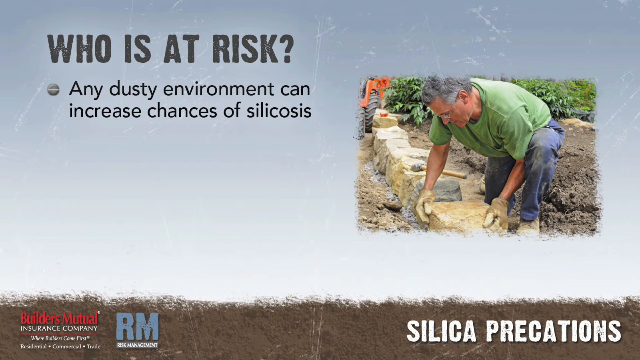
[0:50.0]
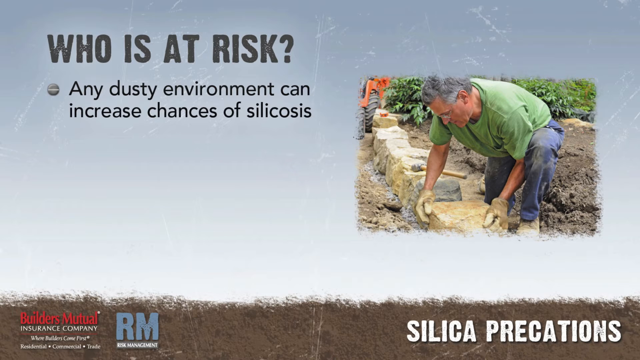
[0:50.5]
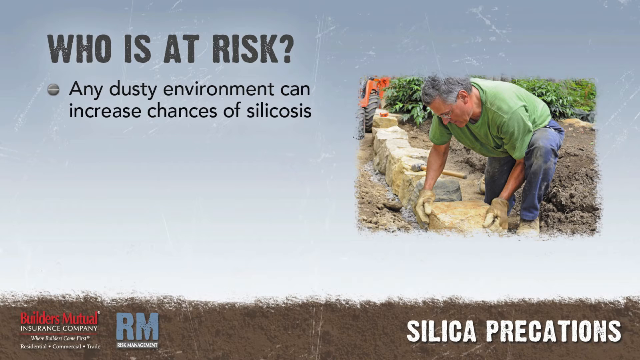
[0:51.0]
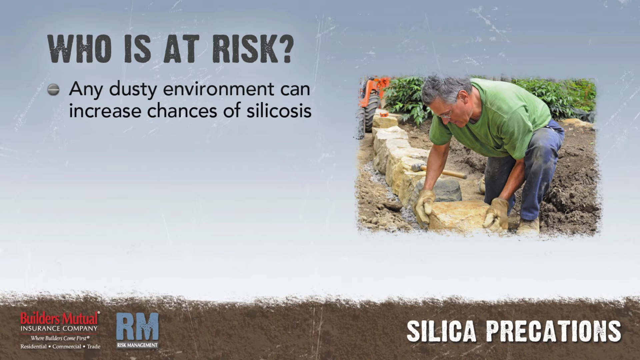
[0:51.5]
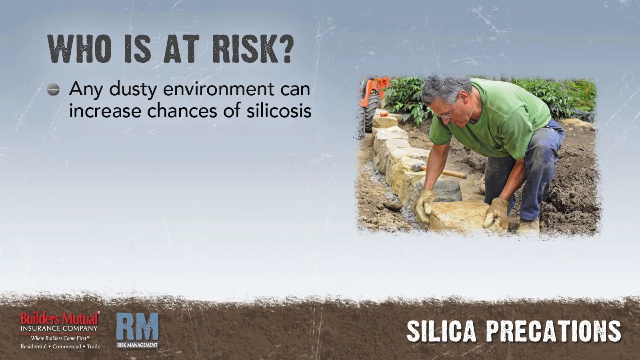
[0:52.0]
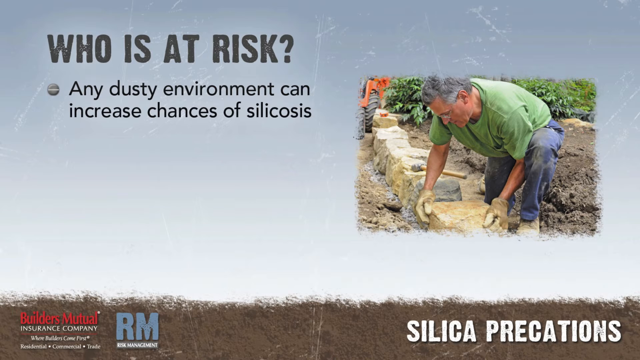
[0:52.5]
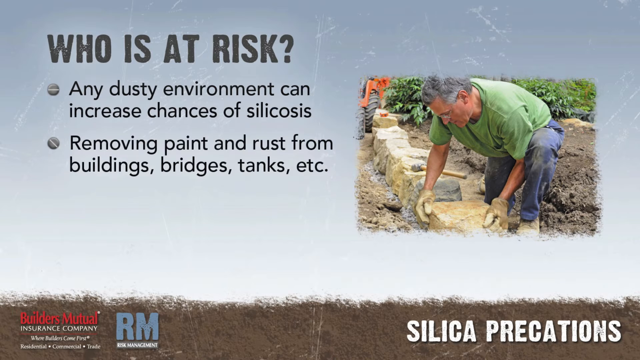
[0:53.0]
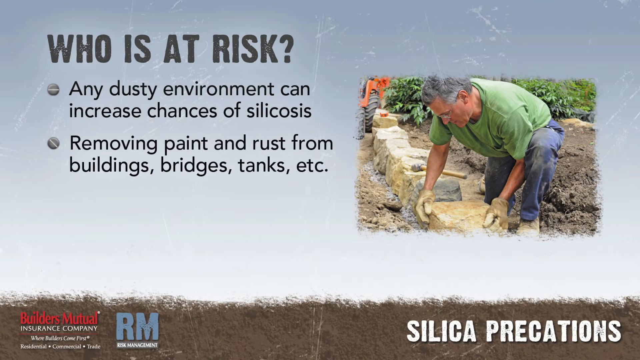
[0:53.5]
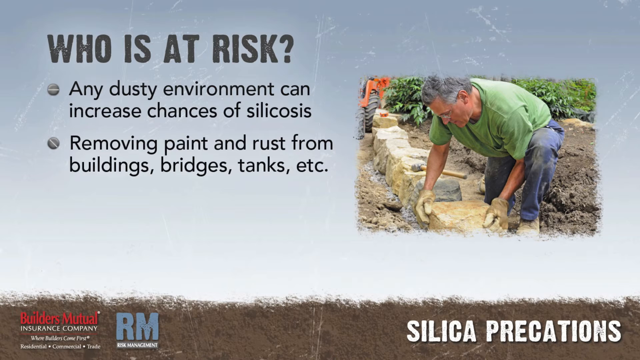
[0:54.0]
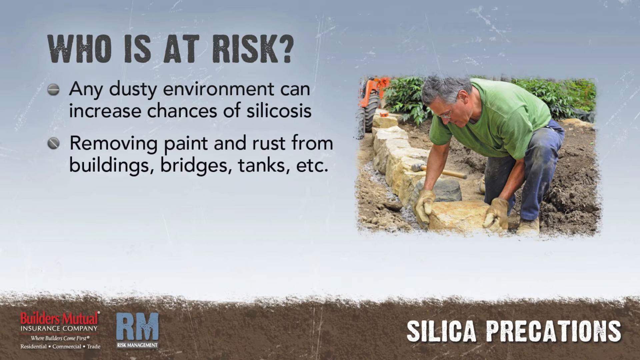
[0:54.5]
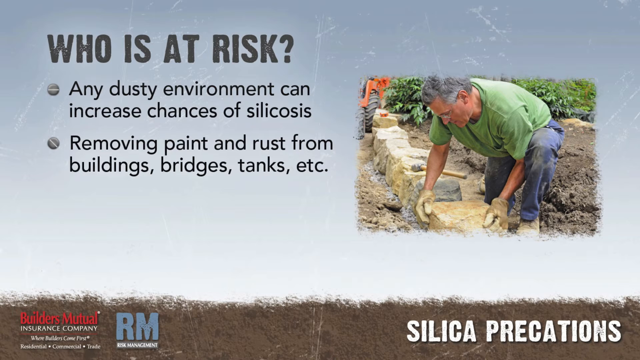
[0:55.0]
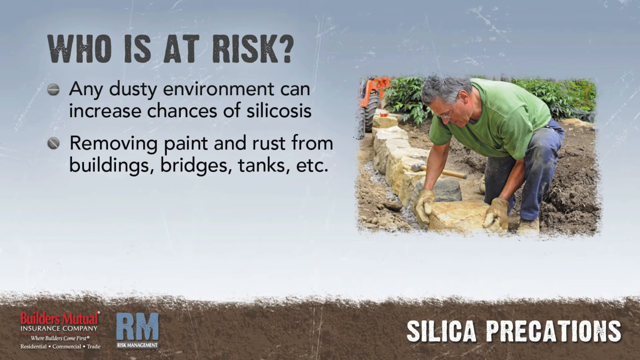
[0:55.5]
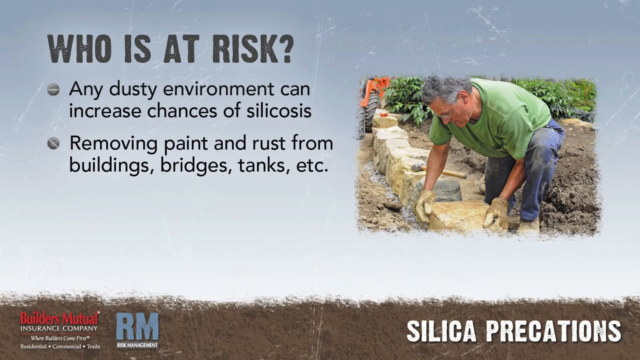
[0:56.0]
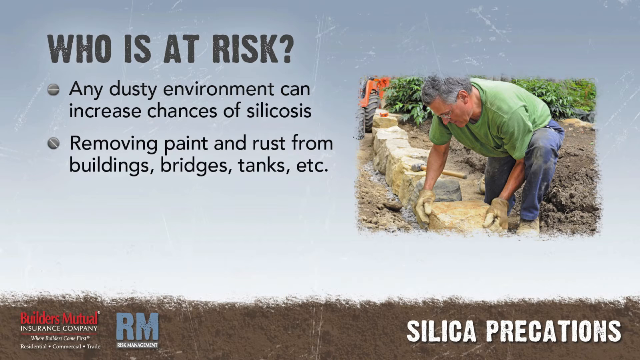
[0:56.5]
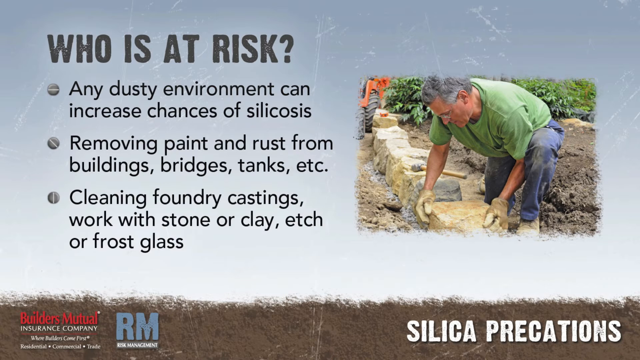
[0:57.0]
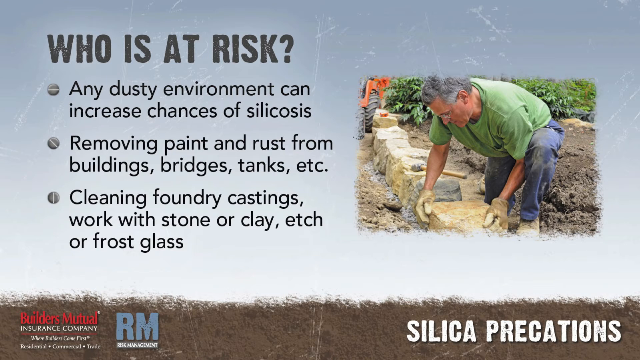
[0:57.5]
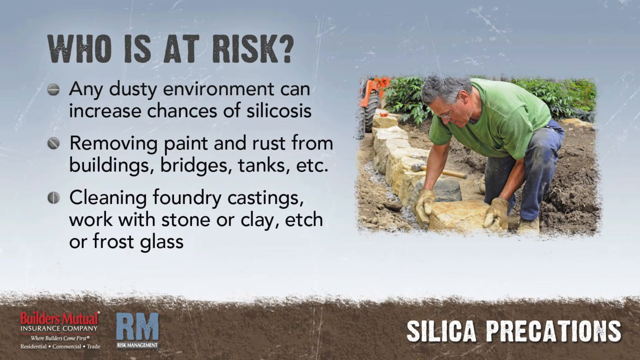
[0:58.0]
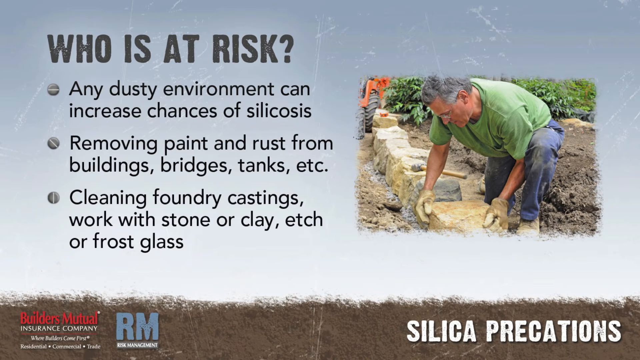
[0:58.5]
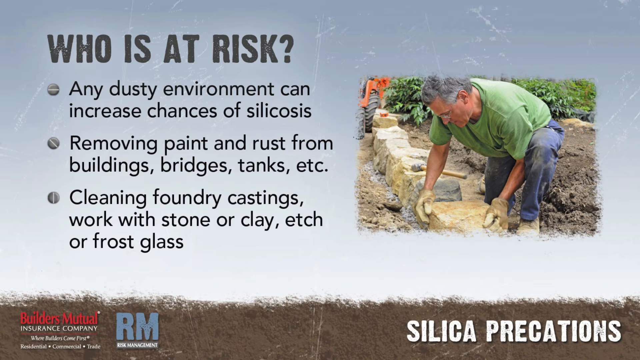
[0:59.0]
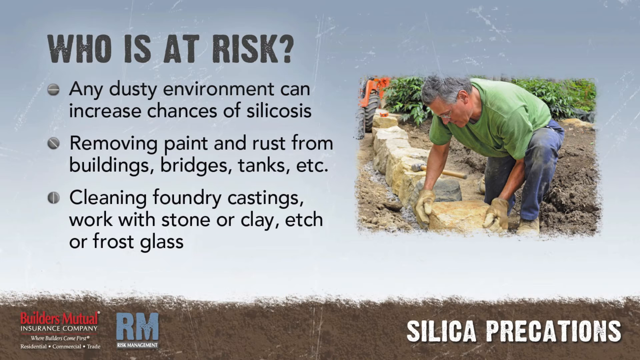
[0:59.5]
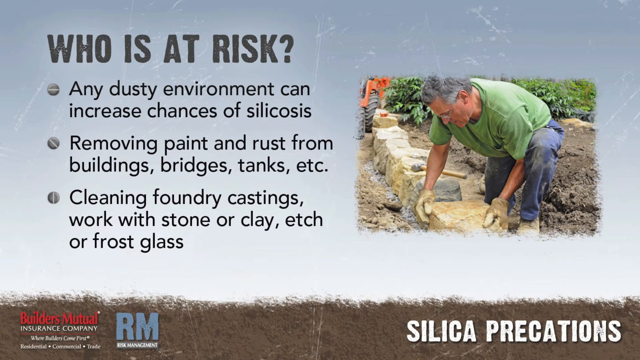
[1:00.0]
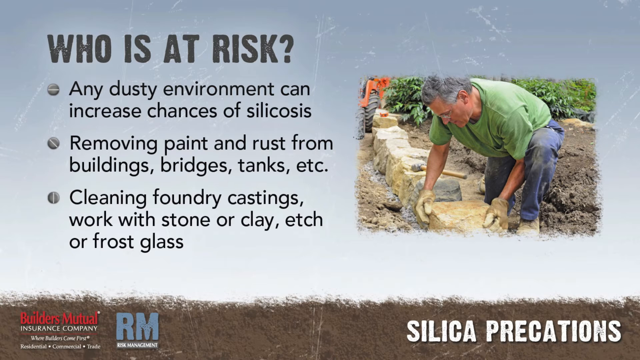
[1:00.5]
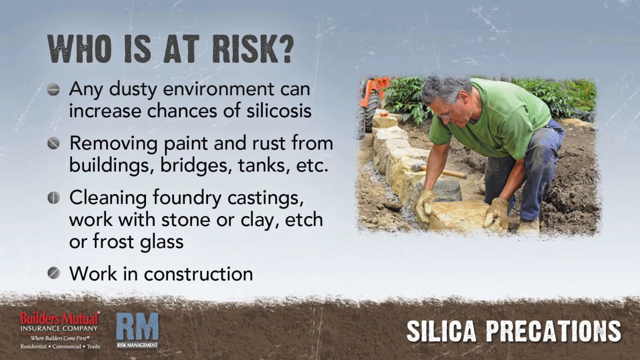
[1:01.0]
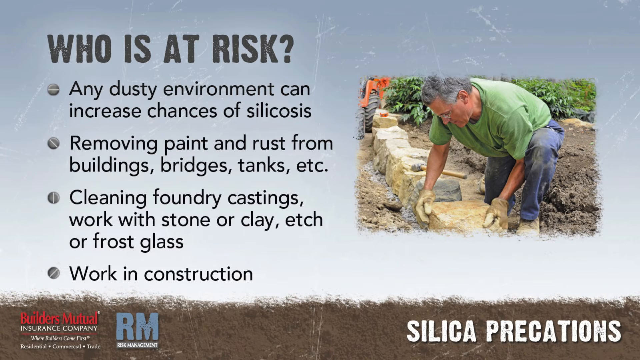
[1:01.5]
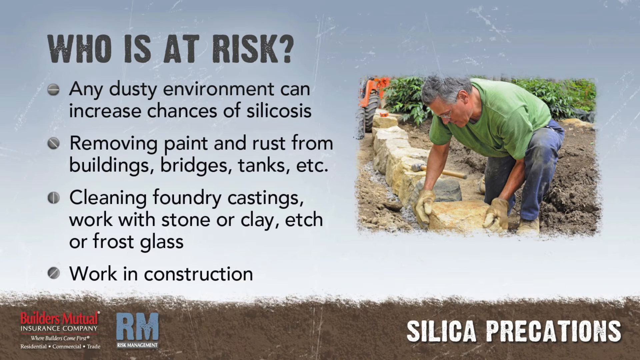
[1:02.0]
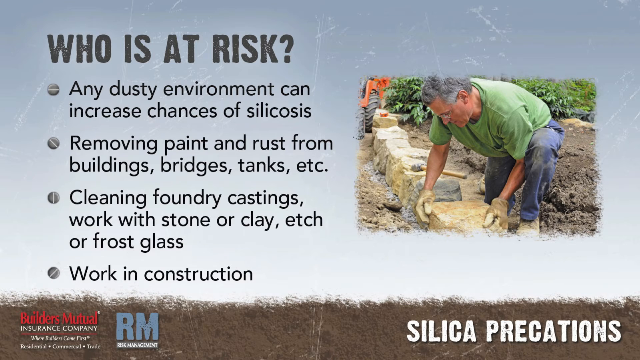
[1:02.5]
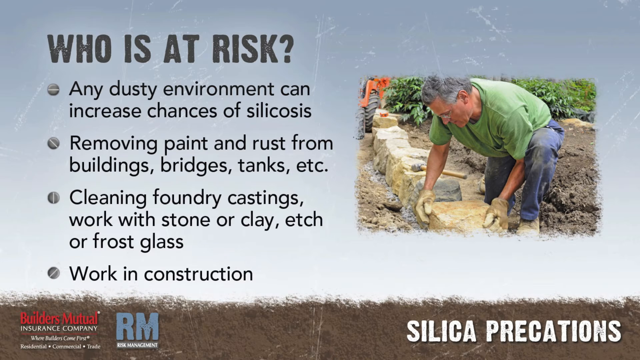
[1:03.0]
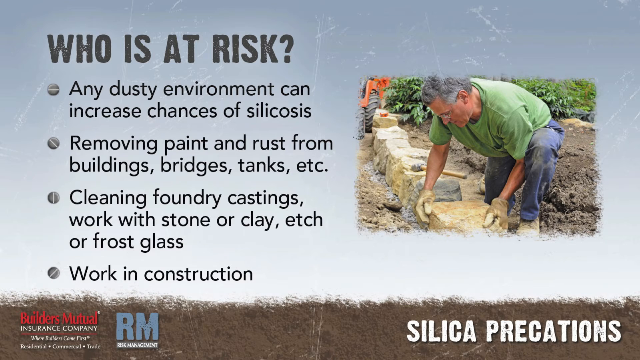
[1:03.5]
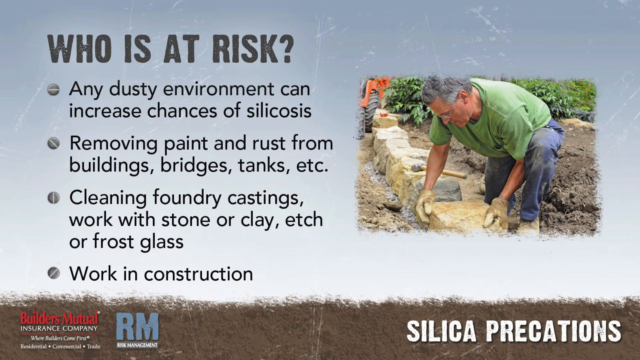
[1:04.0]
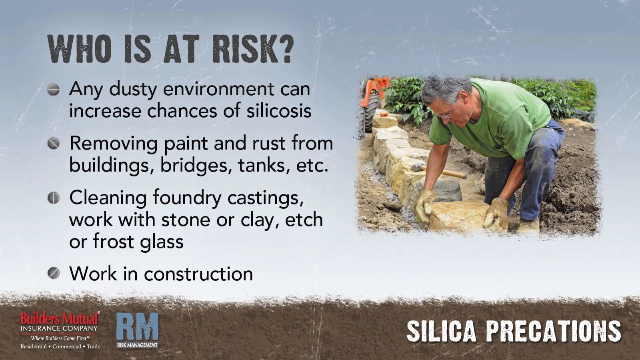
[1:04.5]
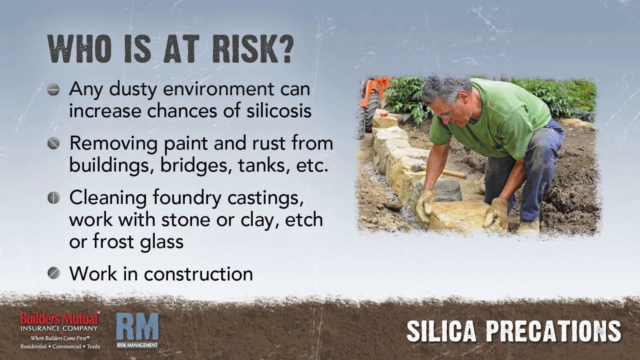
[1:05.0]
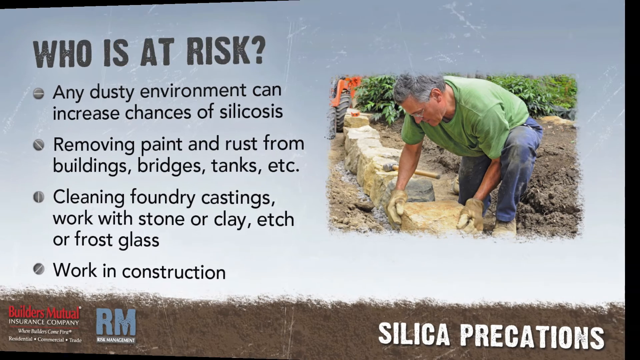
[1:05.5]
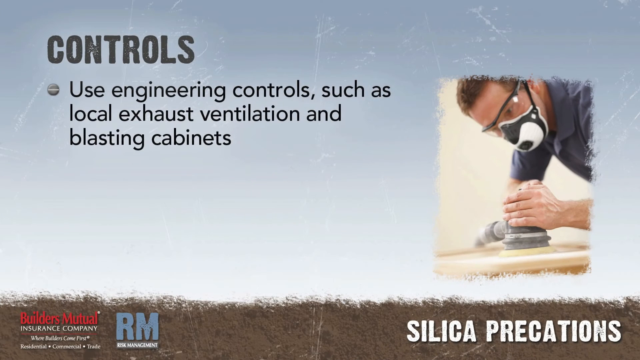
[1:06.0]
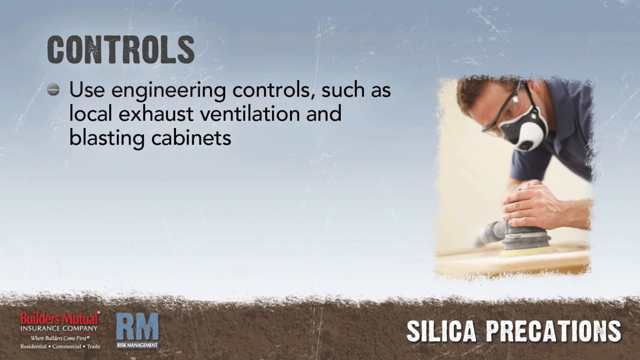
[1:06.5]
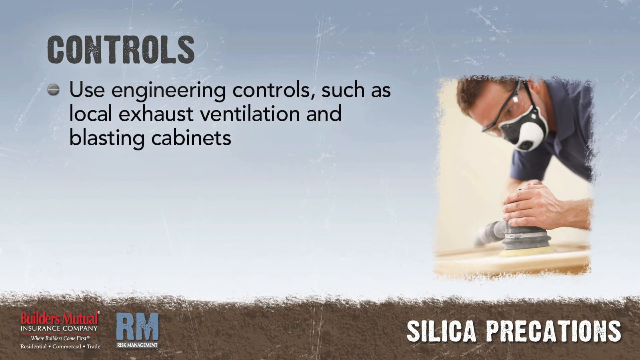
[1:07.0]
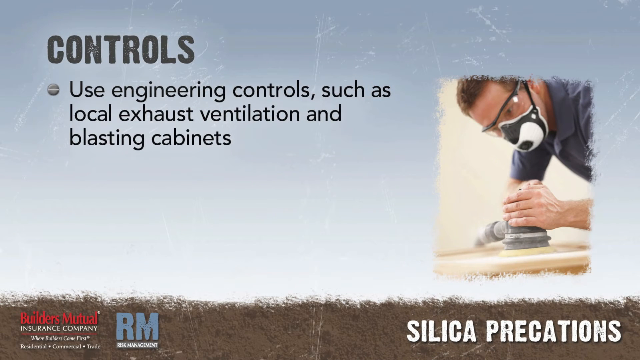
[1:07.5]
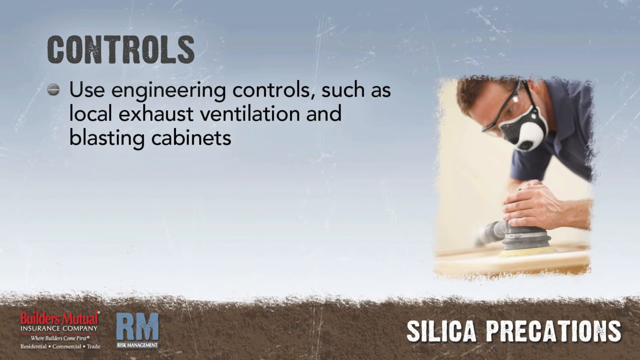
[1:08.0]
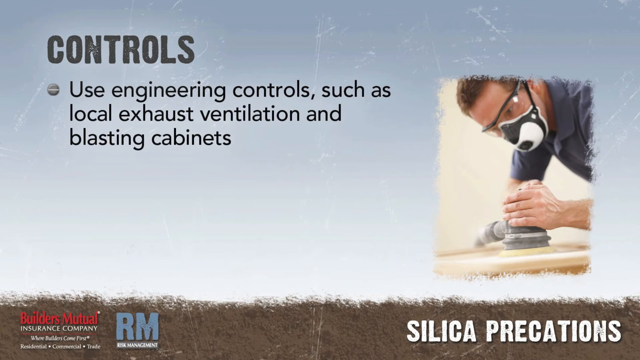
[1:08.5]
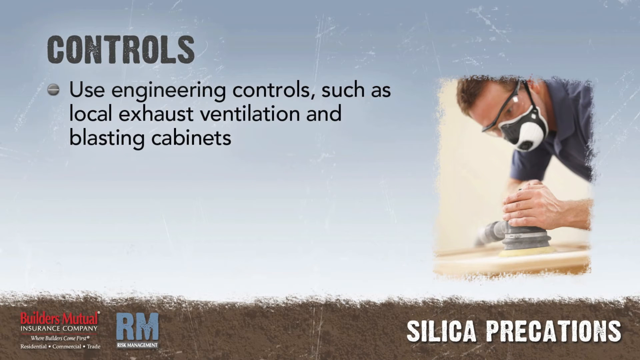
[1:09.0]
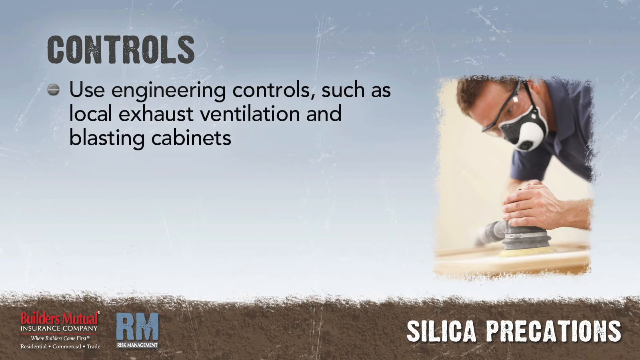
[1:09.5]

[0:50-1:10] A second bullet point appears: "Removing paint and rust from buildings, bridges, tanks, etc." A third follows: "Cleaning foundry castings, work with stone or clay, etch or frost glass." A fourth forms below it: "Work in construction." To the right, a man is bent all the way down with his right knee on the ground in a dirt area, placing a stone down in the dirt beside a row of stones on the ground while looking downward. He wears glasses and has gray hair, and green bushes are in the distance. A different page then appears with the headline "Controls" in the top left corner, and its first bullet point is already on the page: "Use engineering controls such as local exhaust, ventilation, and blasting cabinets."